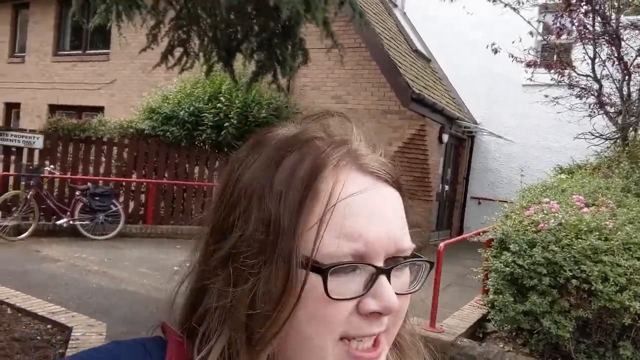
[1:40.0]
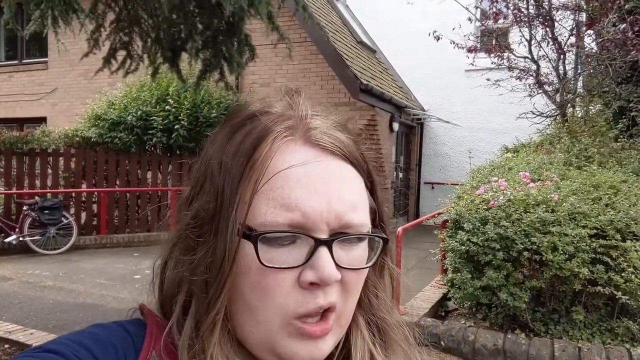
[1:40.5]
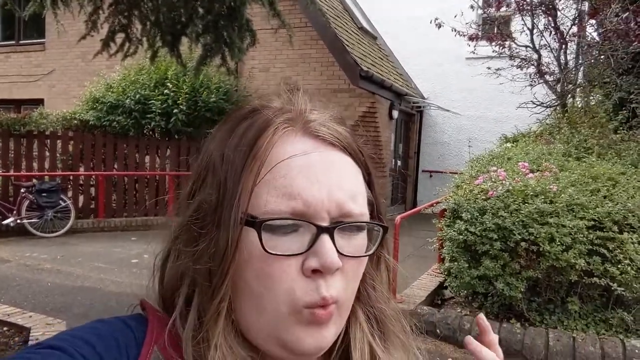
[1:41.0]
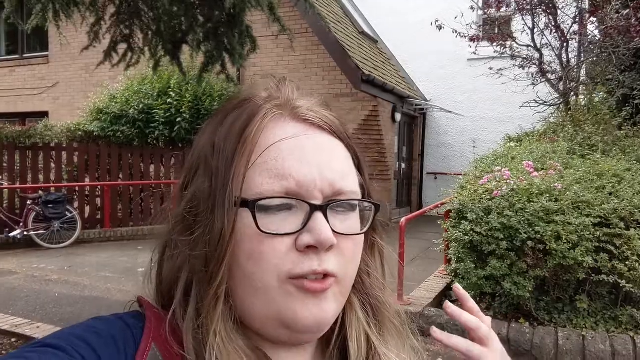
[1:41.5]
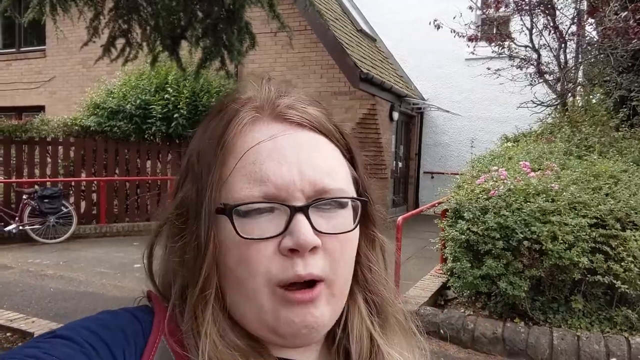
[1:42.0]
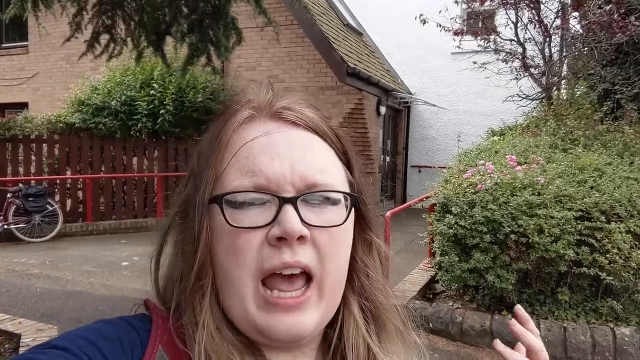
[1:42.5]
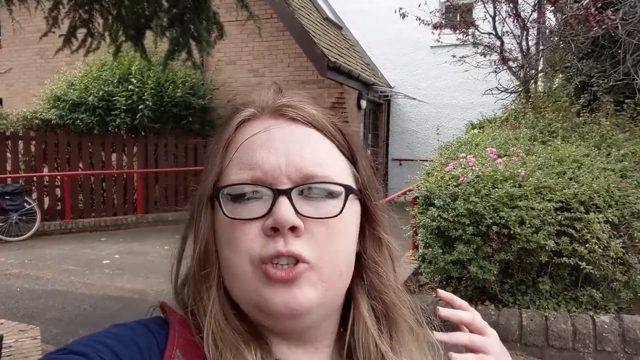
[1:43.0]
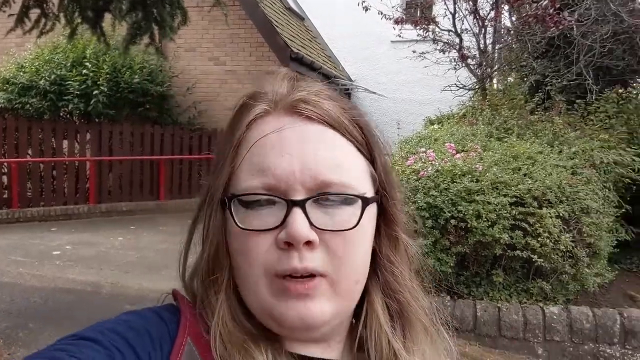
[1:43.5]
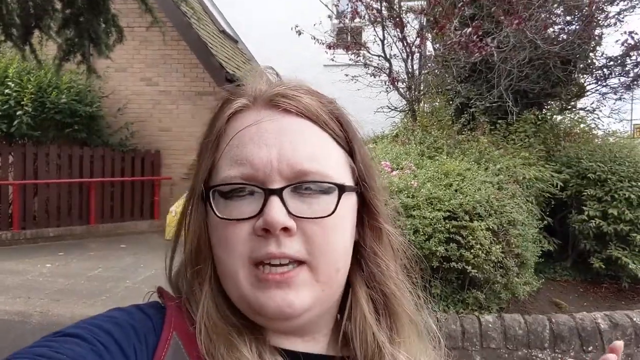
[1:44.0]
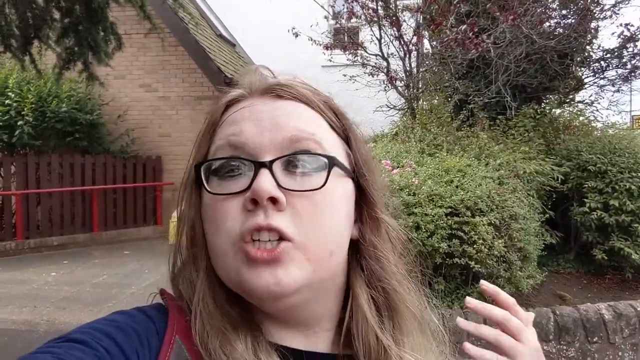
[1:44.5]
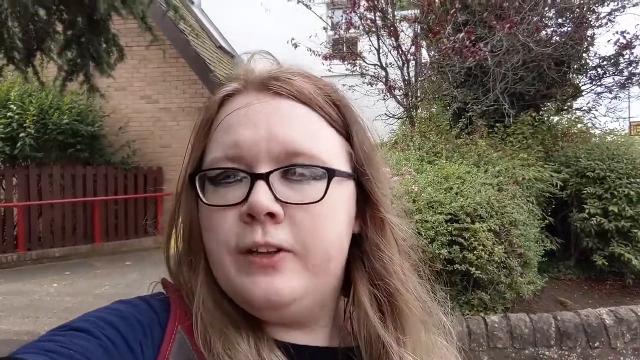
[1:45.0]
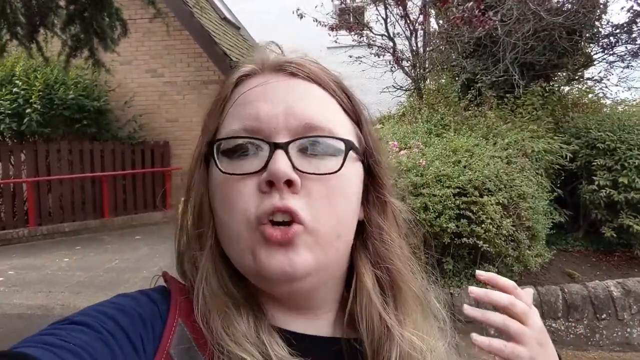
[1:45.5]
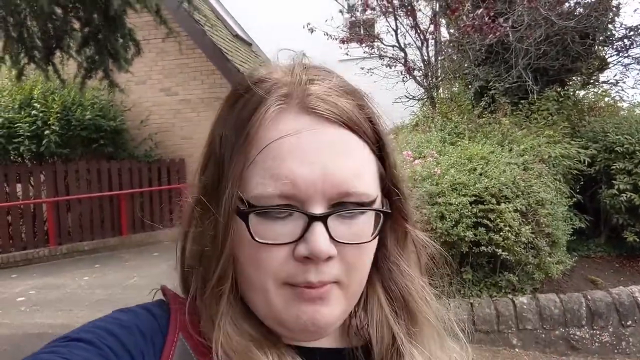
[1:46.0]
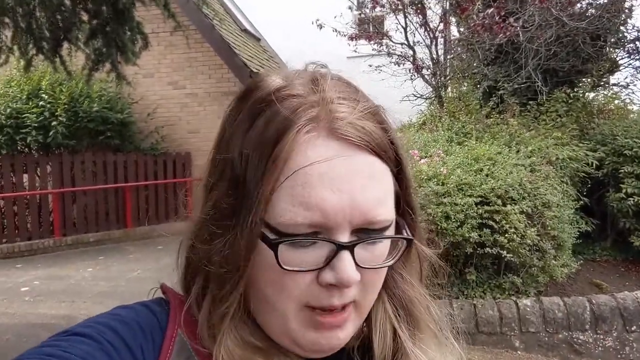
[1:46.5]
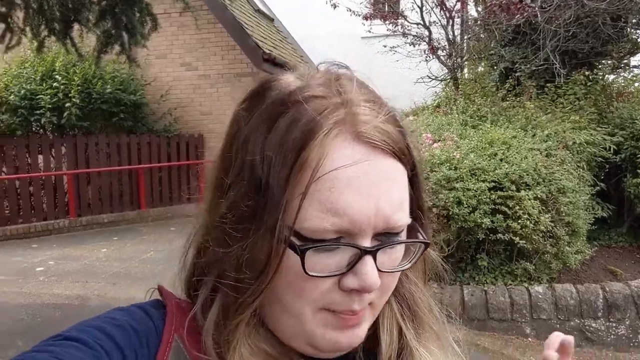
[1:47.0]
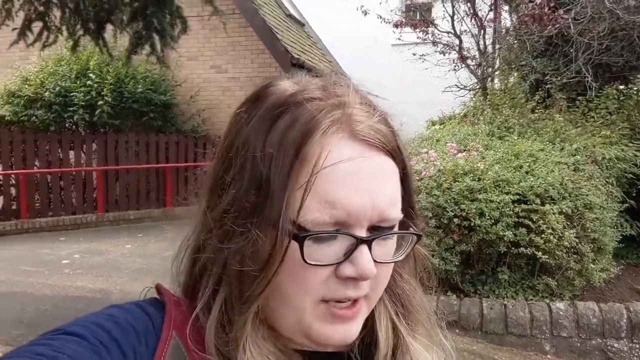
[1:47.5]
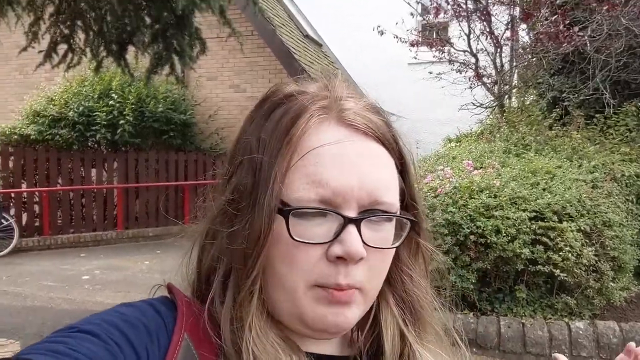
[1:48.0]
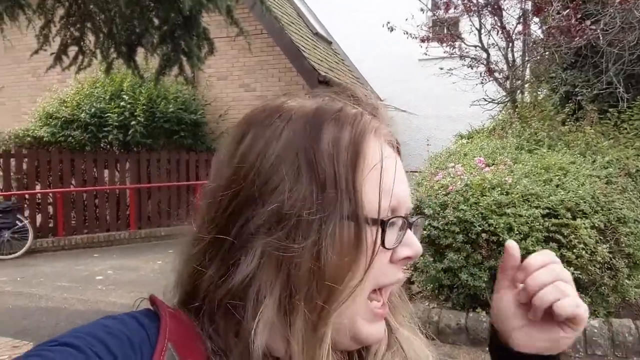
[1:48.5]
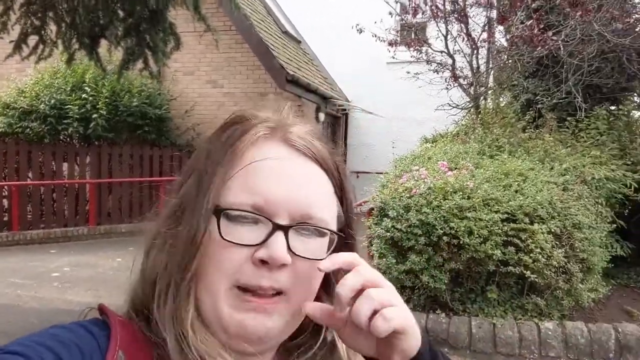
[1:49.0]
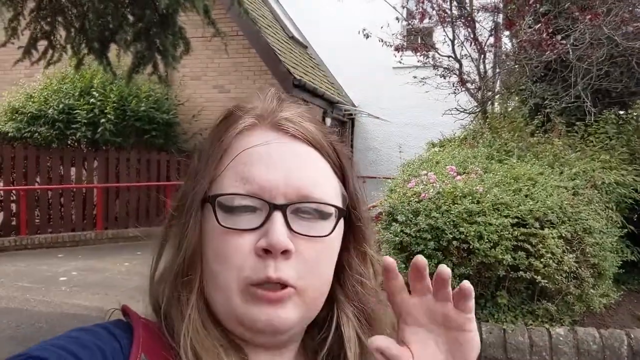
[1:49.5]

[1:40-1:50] The woman is still outside the block of flats. More of the hedgerow is visible; it stands on a patch of earth behind a low wall, with a tree behind it. The building includes the modern apartment block and a white element, possibly an older original building with an extension added. Beyond the woman's left shoulder the railings are visible, and no parkland can be seen. The tree has few leaves, while the bushes are in blossom.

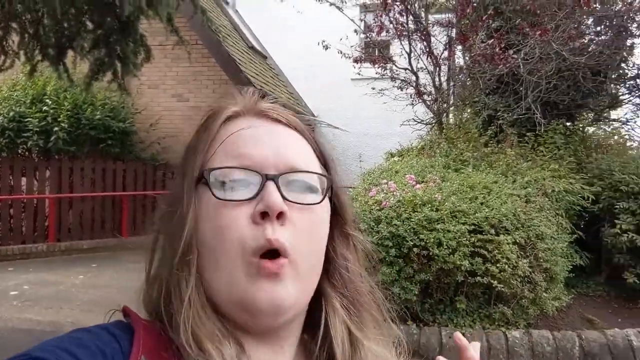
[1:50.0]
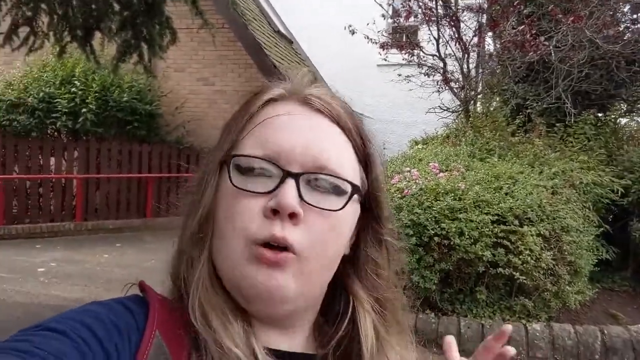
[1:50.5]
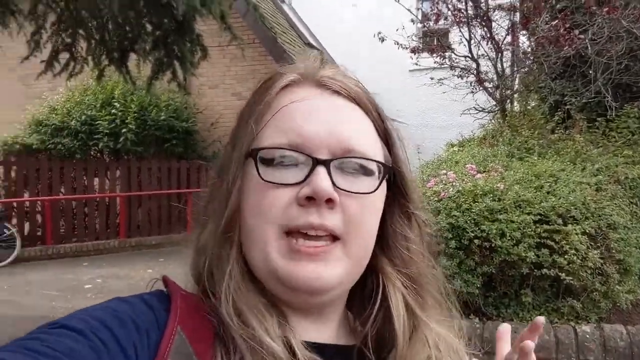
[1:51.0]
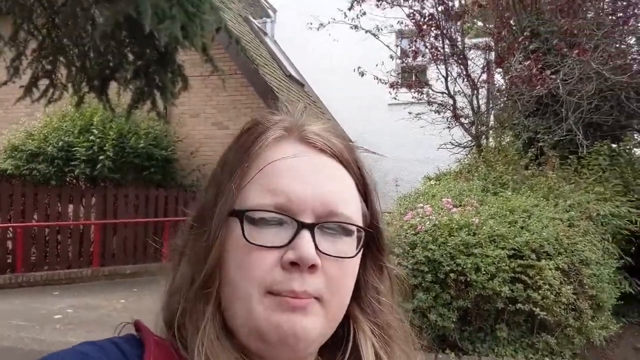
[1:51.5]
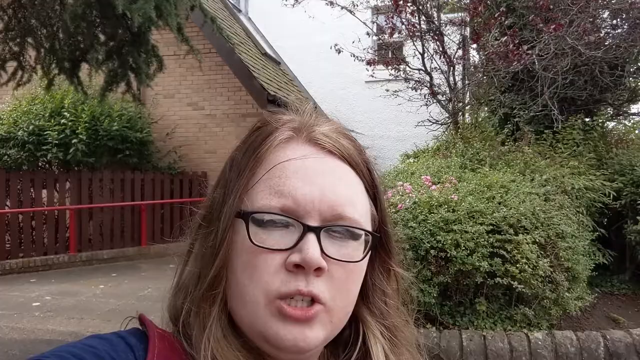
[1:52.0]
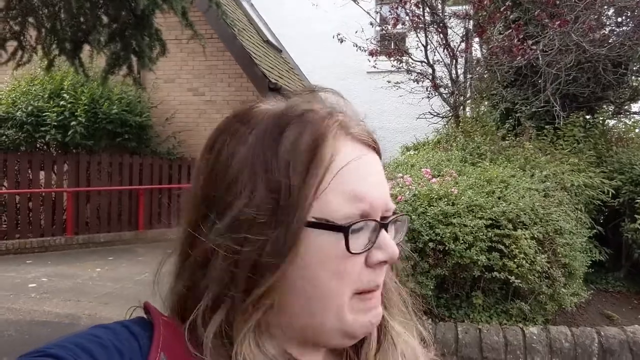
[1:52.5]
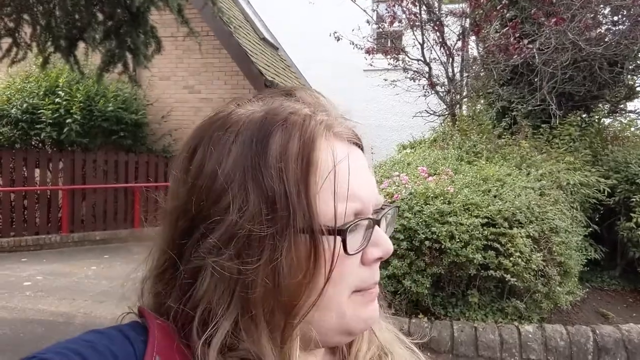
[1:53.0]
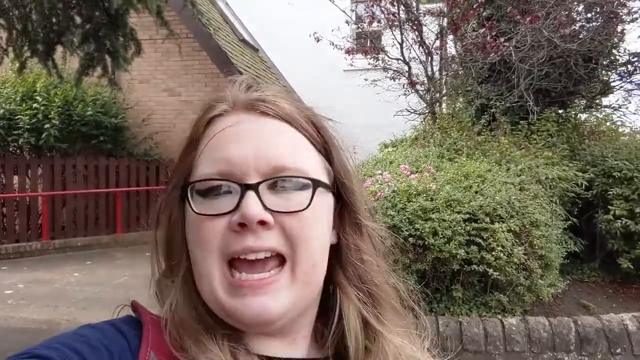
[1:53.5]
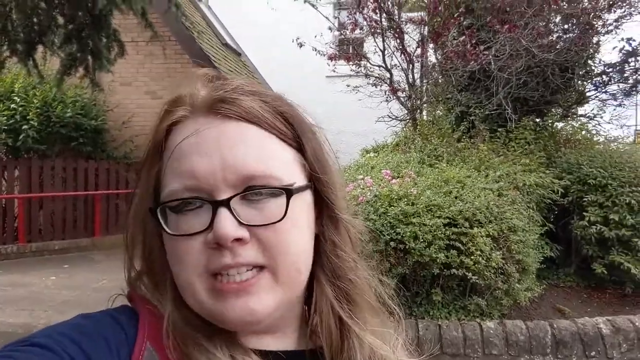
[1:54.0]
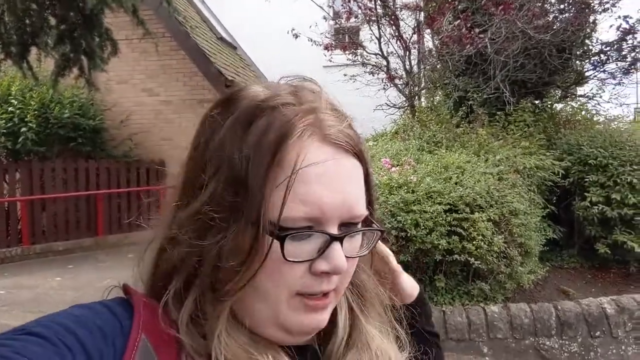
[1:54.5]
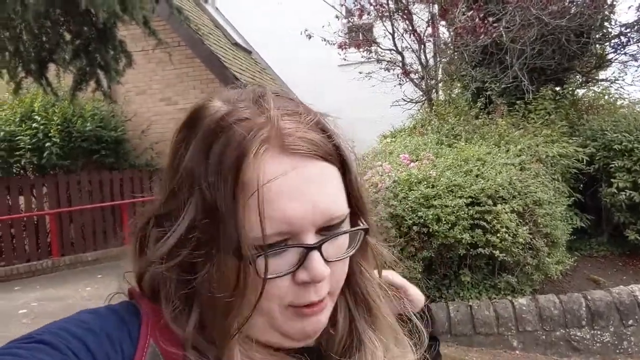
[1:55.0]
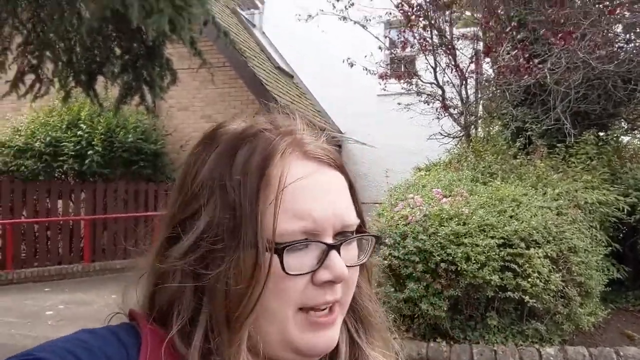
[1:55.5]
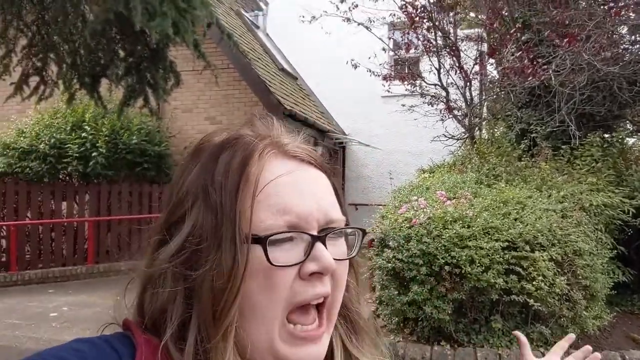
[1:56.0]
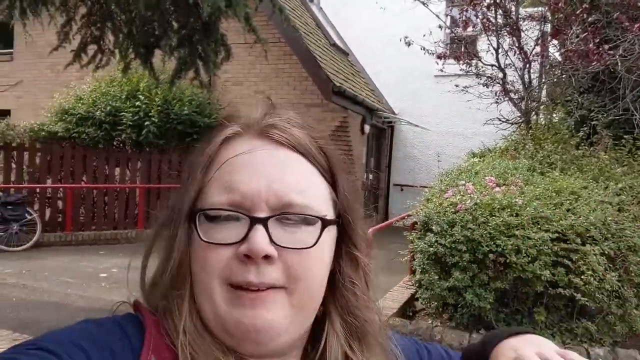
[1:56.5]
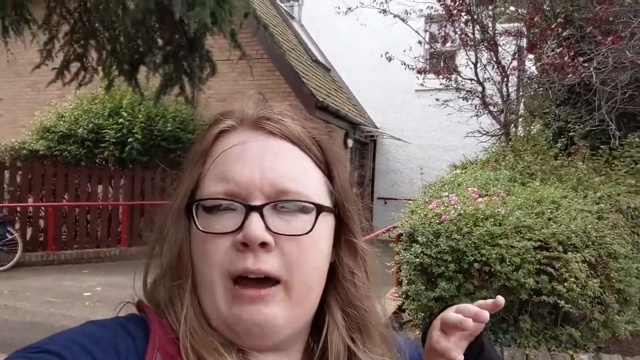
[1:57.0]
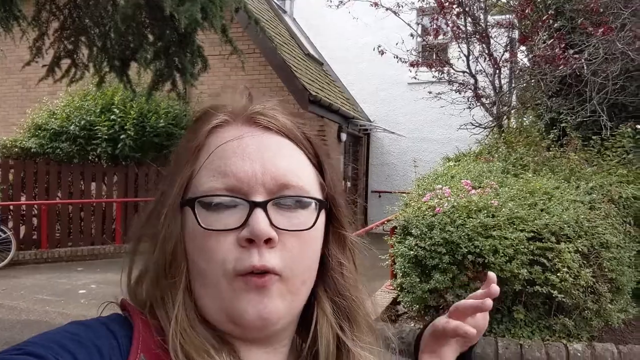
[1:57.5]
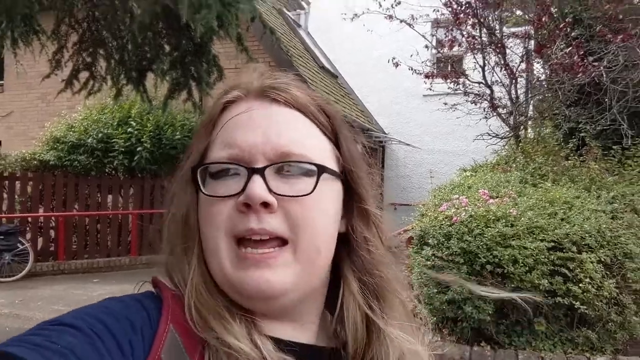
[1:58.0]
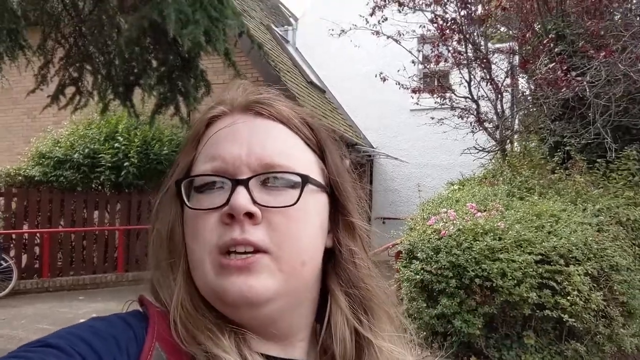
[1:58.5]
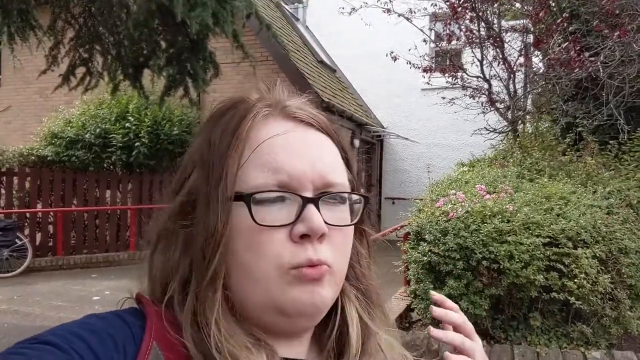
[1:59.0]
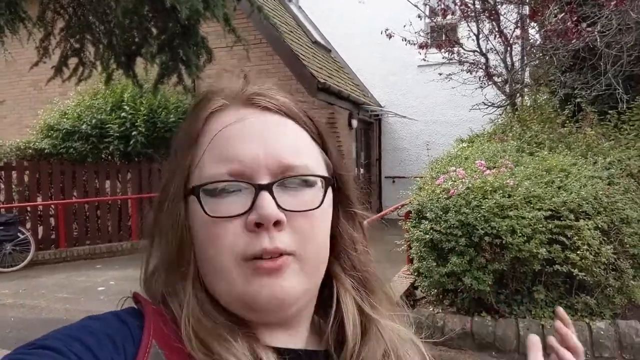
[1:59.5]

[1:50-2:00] The woman continues talking to the selfie camera on her phone, getting expressive again. The view is the same: bushes blossoming pink, a tree with few leaves, a white building that looks older, and the more modern brick building. The woman remains standing beneath the conifer tree.